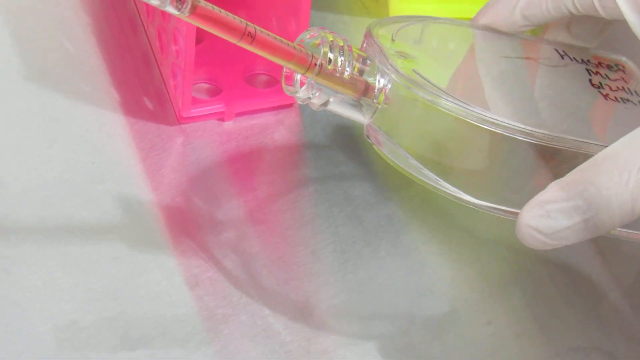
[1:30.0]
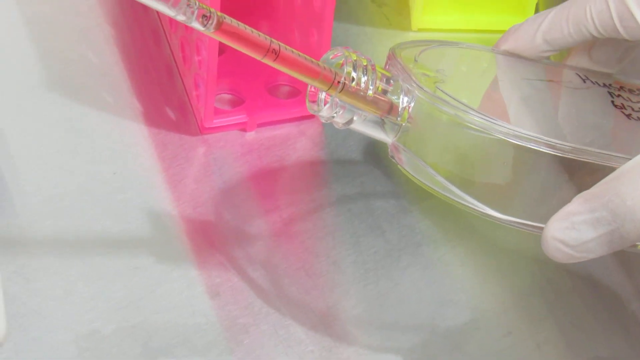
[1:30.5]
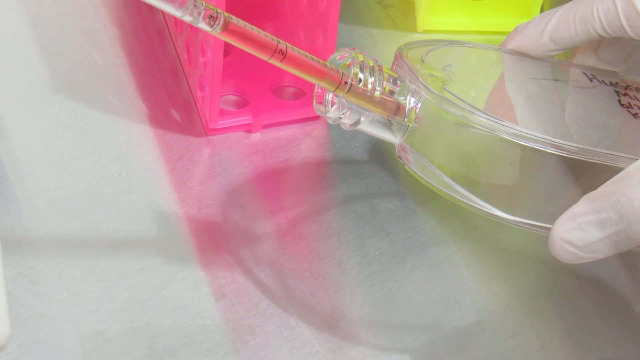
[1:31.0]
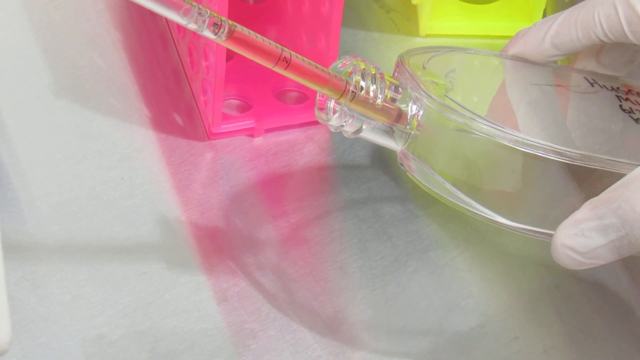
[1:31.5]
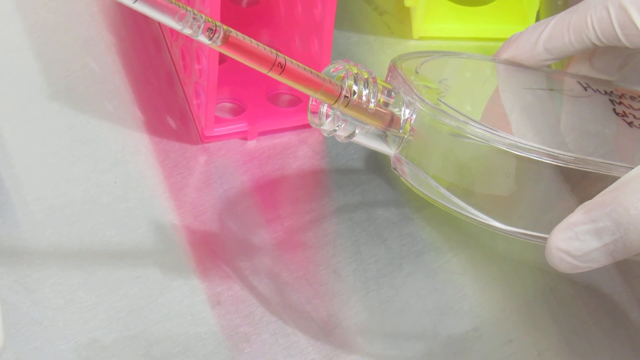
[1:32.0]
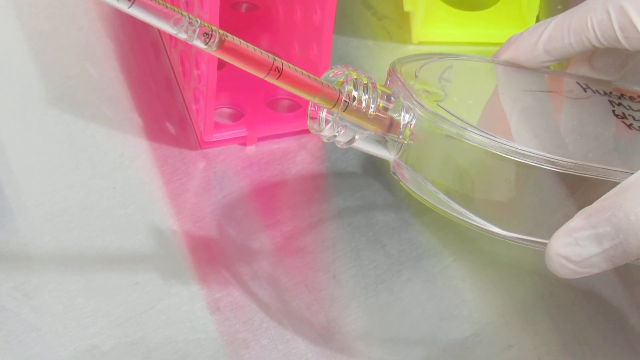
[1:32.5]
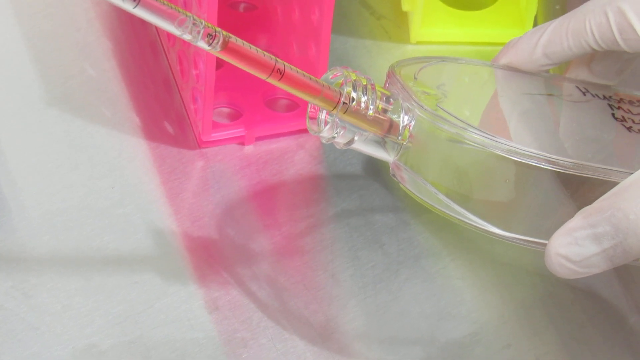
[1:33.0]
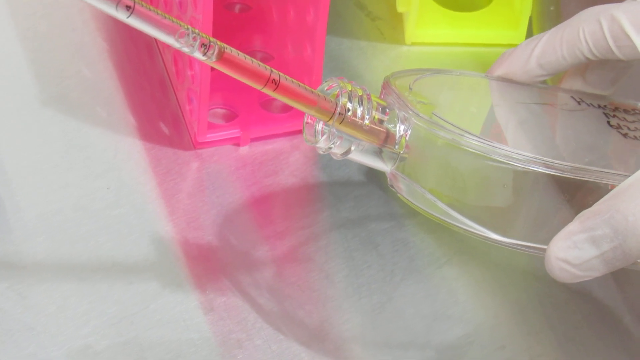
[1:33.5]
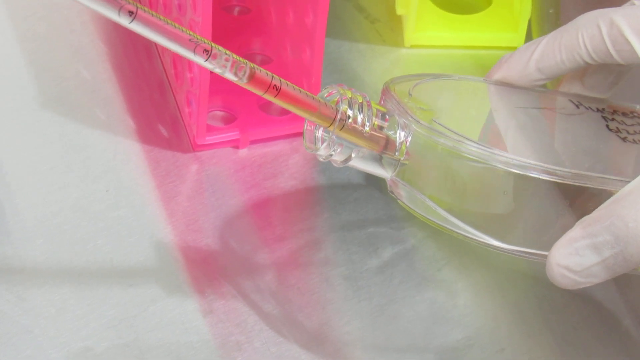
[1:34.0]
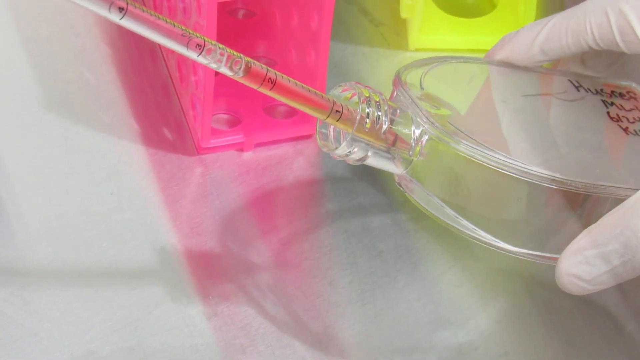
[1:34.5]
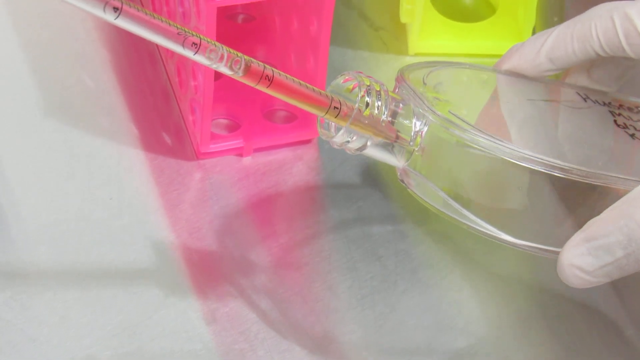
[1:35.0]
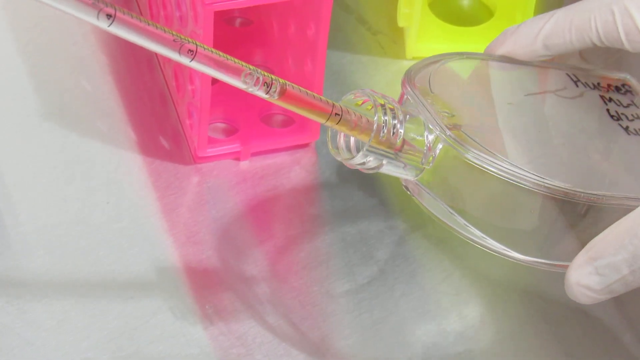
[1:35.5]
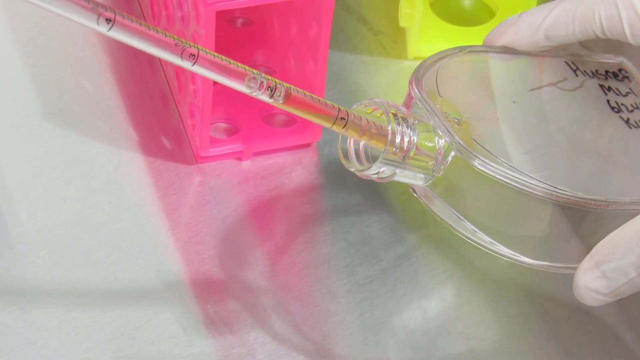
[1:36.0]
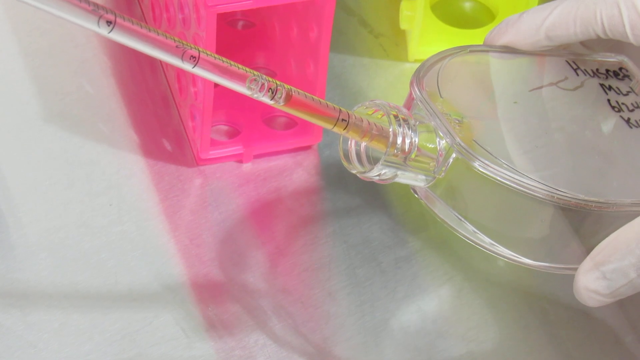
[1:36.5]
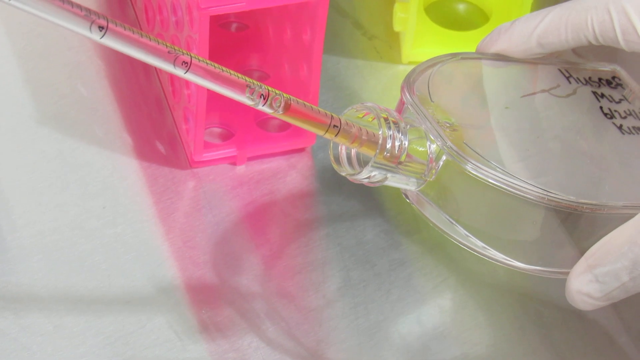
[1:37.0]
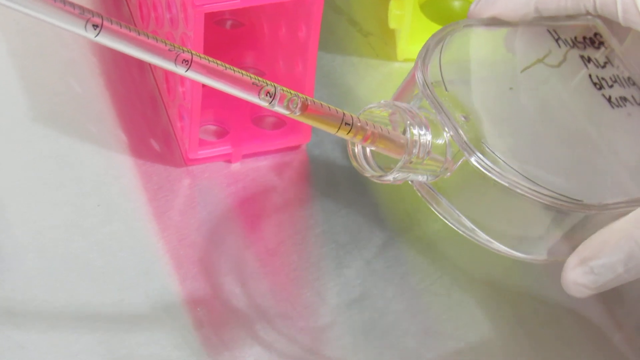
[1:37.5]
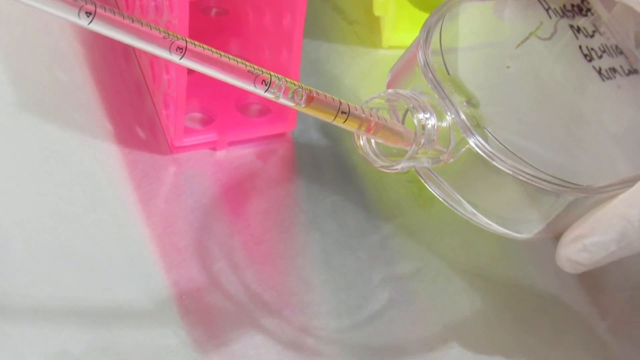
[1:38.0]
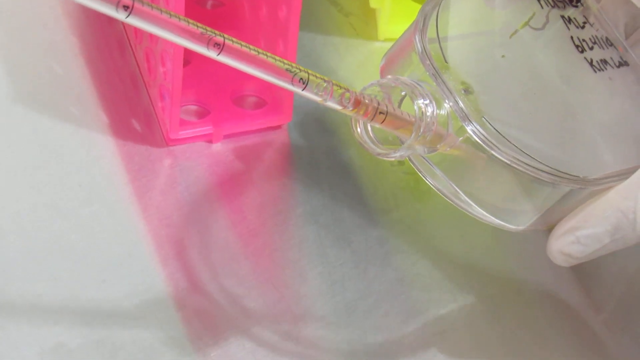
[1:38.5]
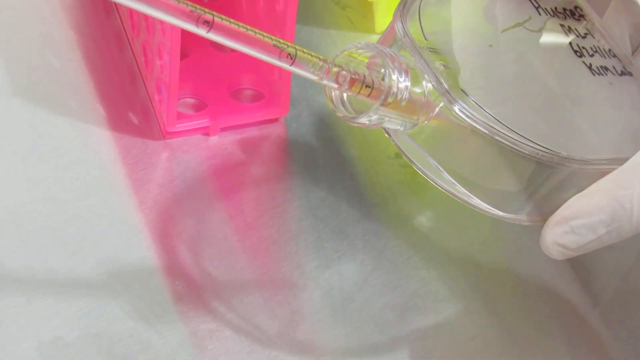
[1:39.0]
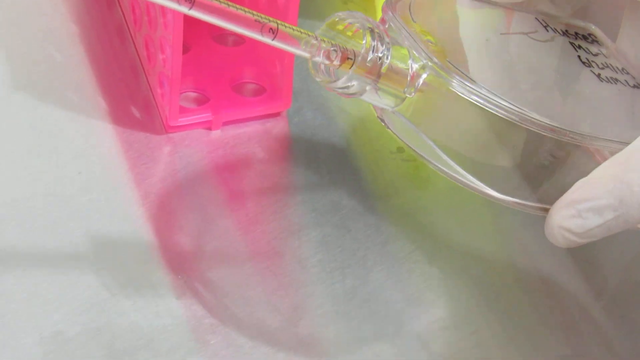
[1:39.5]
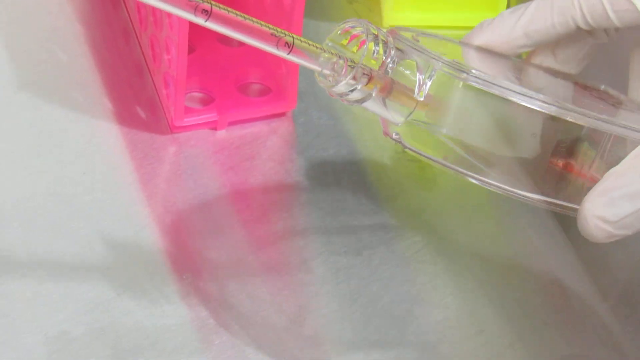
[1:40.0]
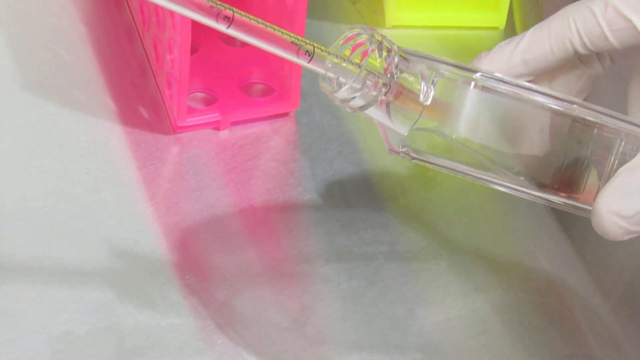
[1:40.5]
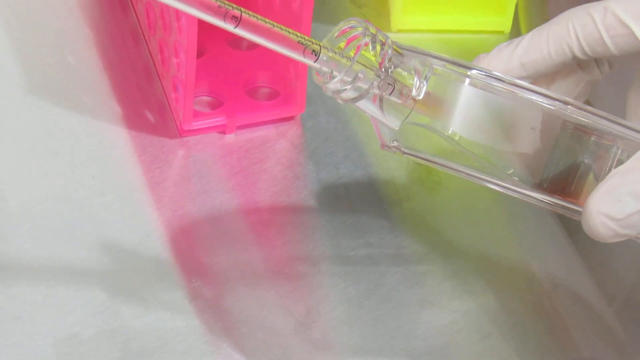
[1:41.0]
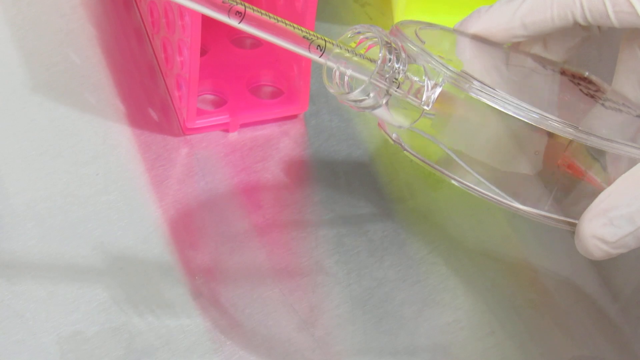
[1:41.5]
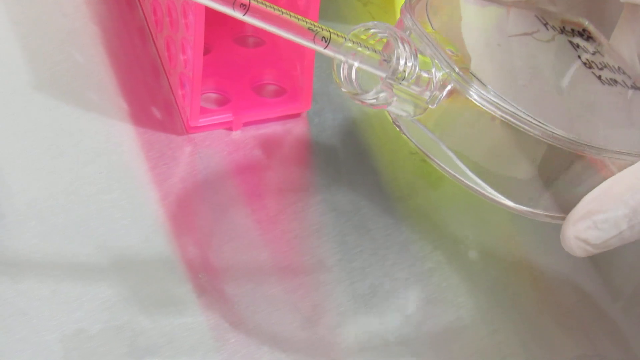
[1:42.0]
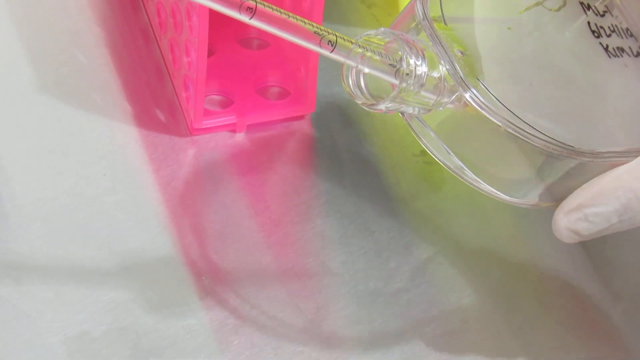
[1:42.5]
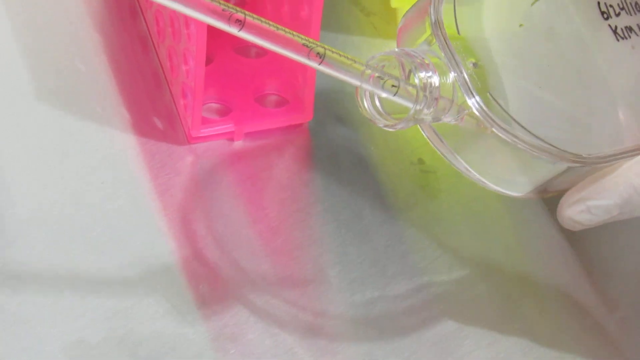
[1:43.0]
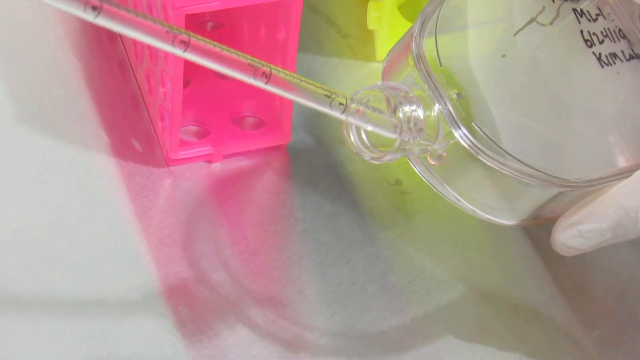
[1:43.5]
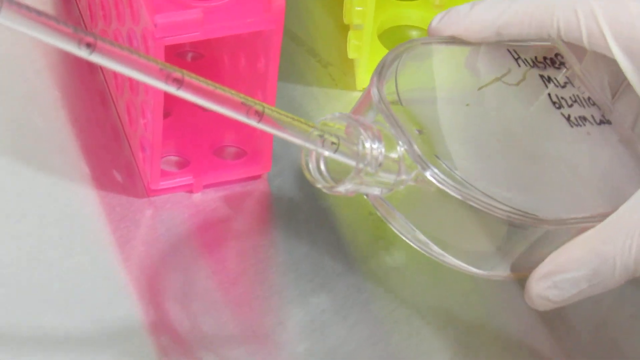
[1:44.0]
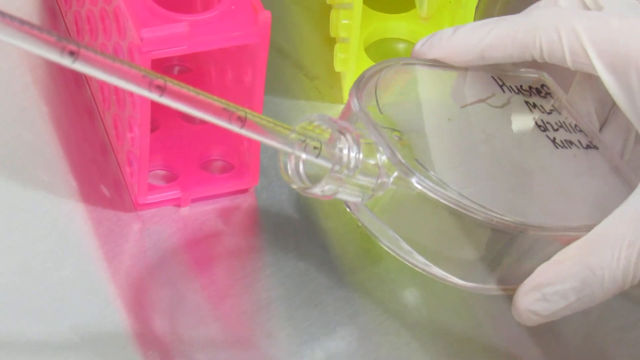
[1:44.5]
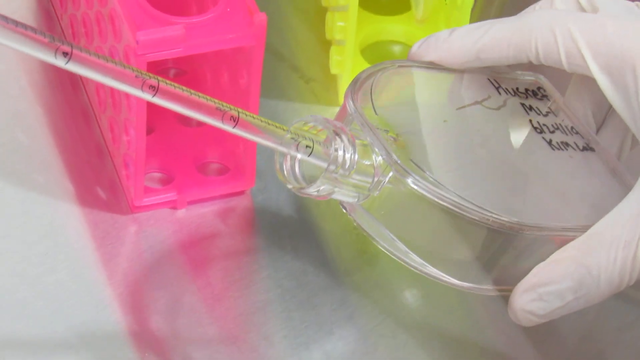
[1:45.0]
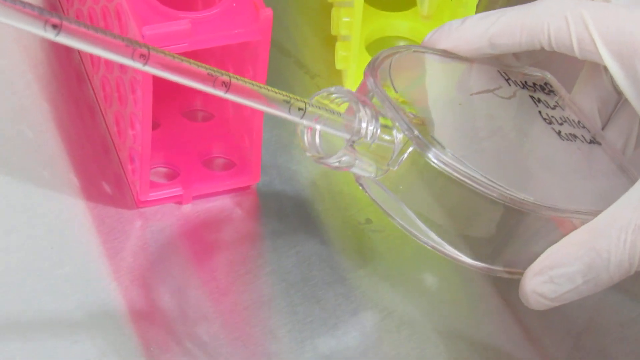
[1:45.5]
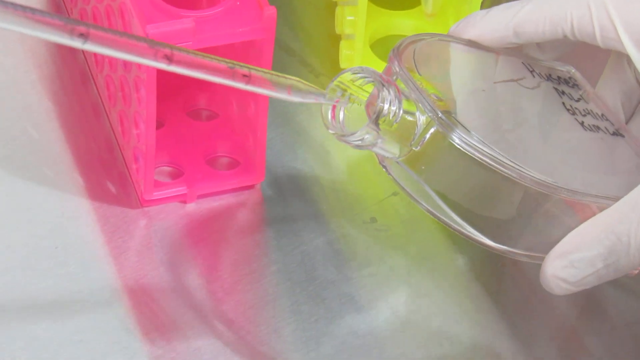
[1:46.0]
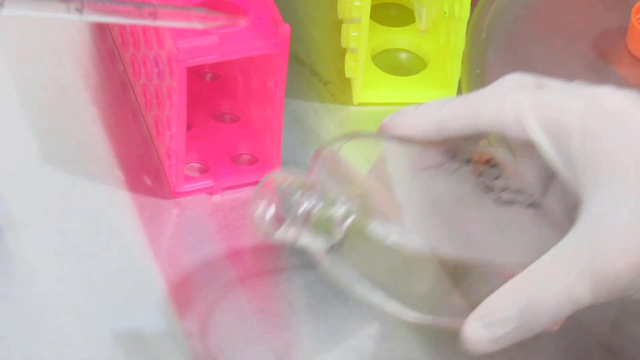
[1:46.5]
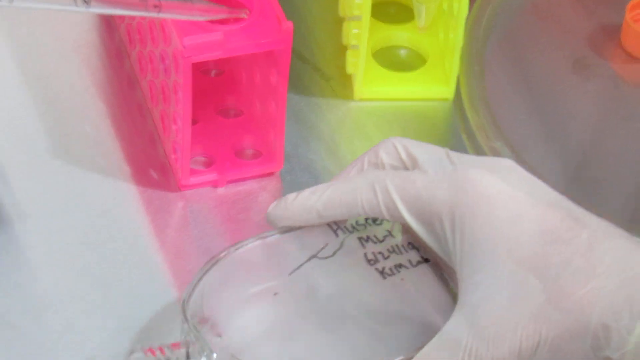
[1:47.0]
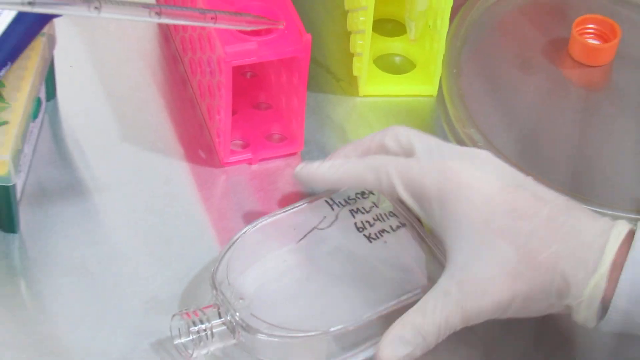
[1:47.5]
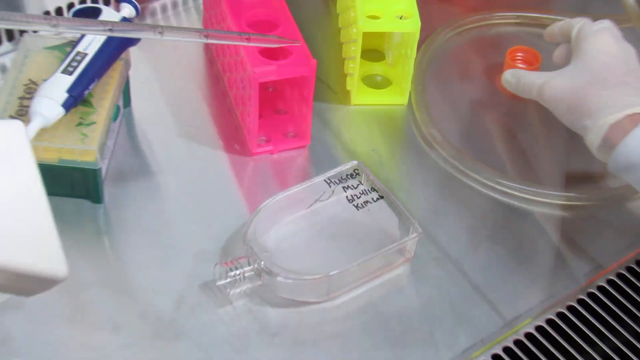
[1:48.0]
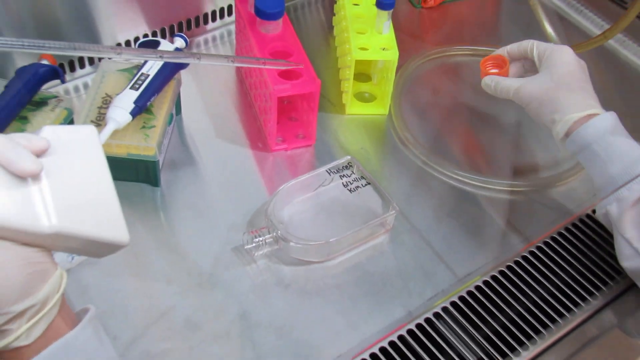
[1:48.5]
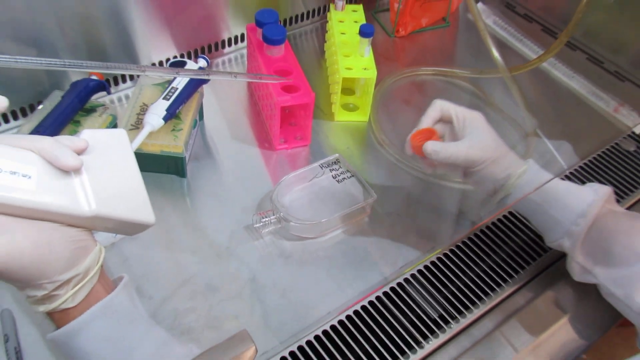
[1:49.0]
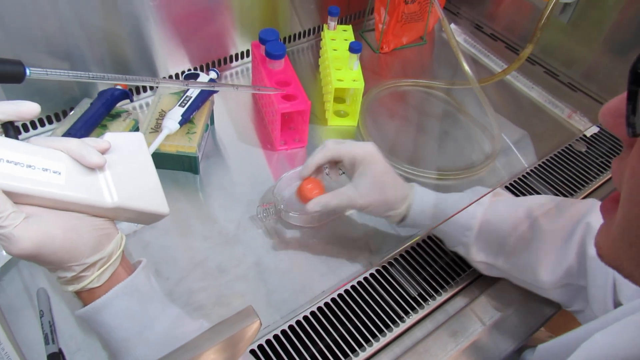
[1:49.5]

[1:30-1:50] The clear bottle is held in the left hand and tilted toward the left. Black writing on it looks like it was done with a marker, probably a permanent marker. It is in four rows, apparently one word each. The first looks like "HUSREP". Underneath that it reads "MLIL1", the last characters possibly a lowercase l. Below that is "6-24-1", apparently a date. Underneath that it looks like it says "KIM", possibly the name of the person doing the work. The pipette is inside the clear bottle with the writing. The person tilts the bottle left and right, apparently to get the liquid to slide around as it is released inside. Then the right hand looks about to screw the orange lid back on.